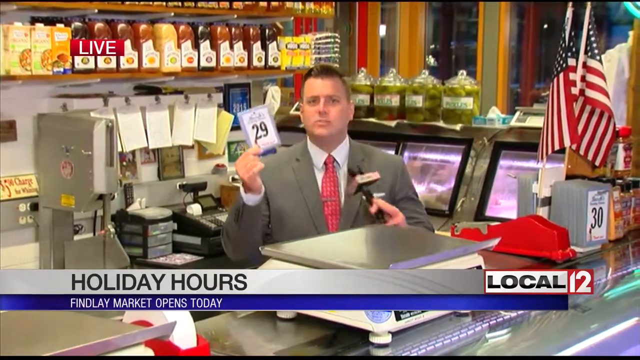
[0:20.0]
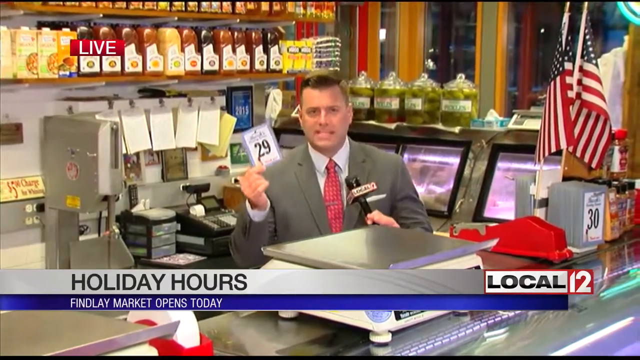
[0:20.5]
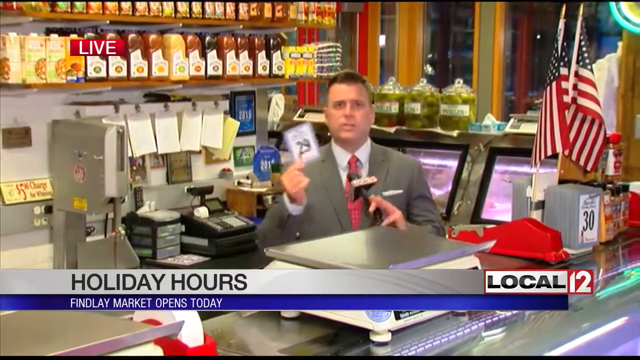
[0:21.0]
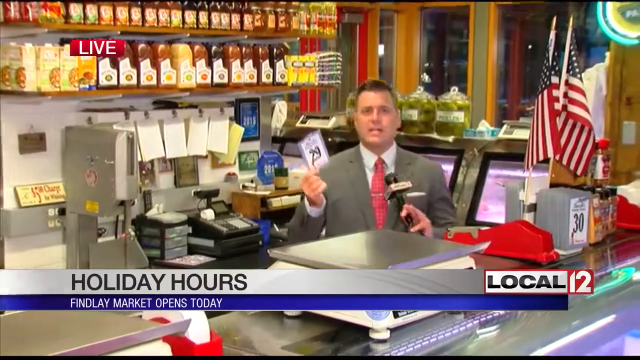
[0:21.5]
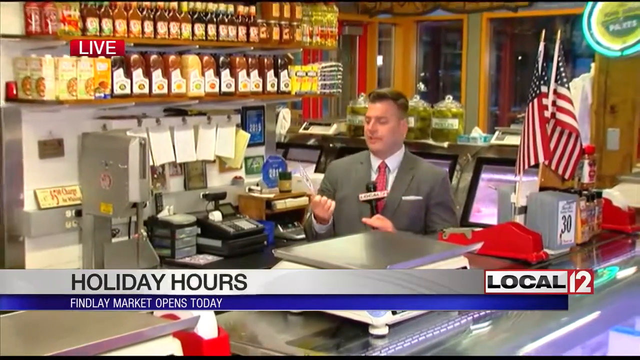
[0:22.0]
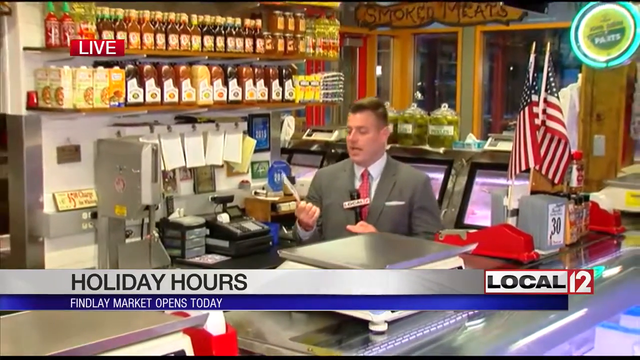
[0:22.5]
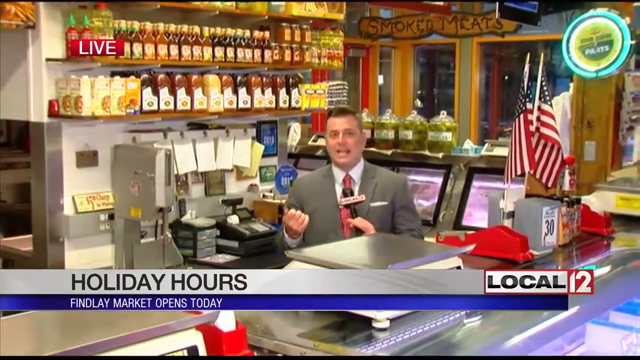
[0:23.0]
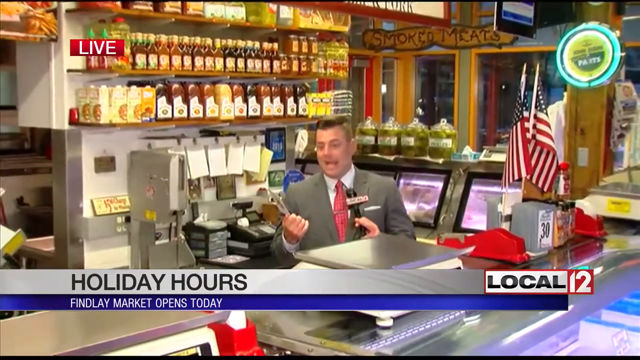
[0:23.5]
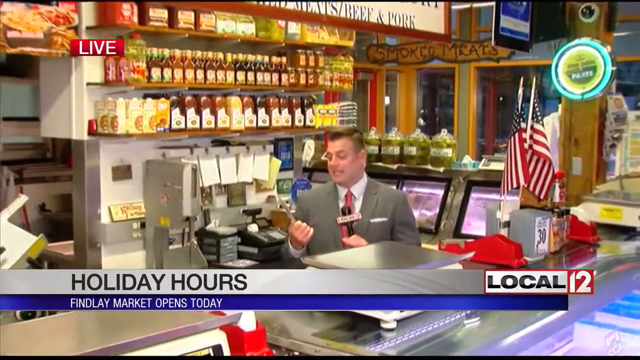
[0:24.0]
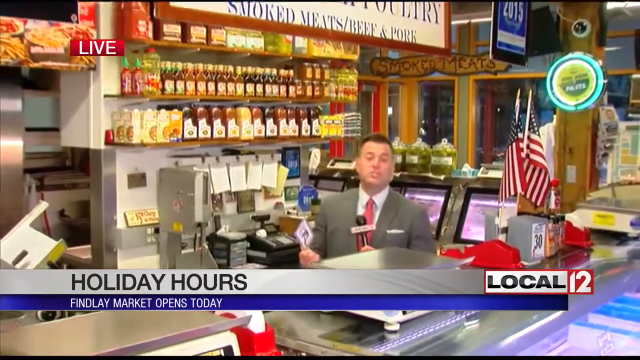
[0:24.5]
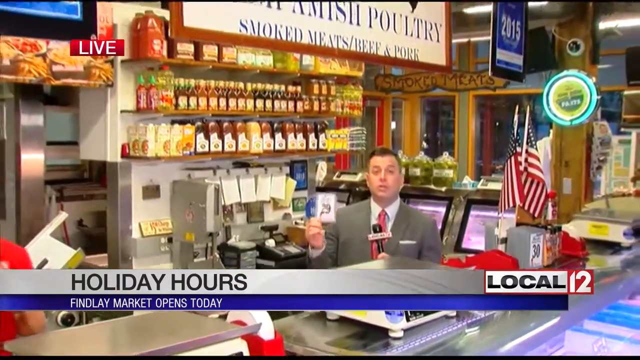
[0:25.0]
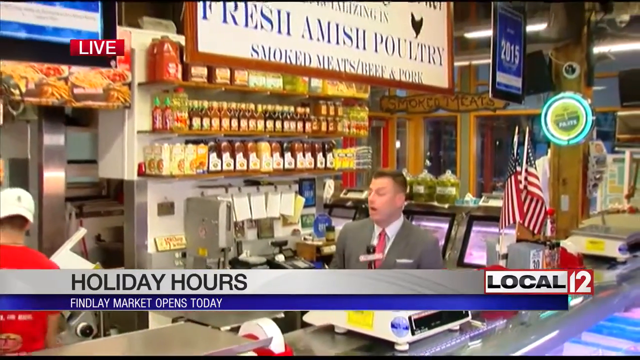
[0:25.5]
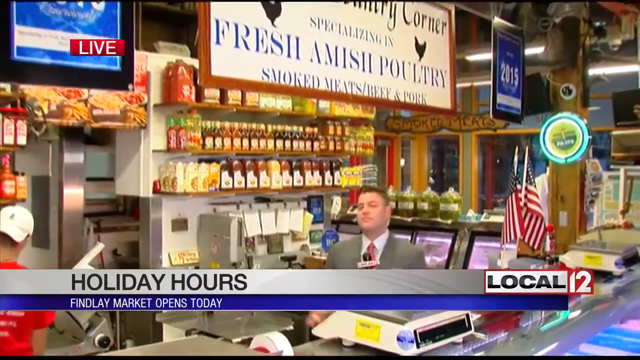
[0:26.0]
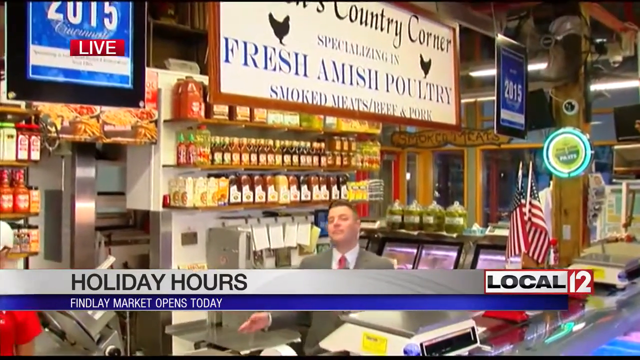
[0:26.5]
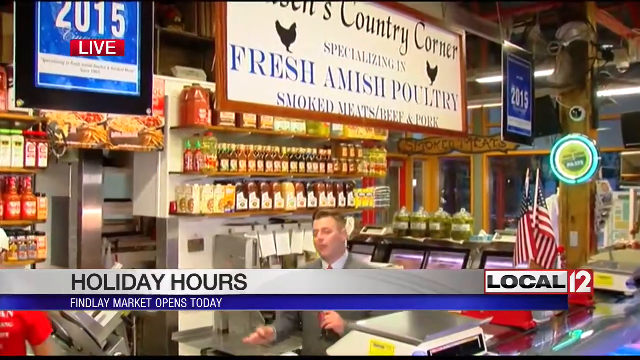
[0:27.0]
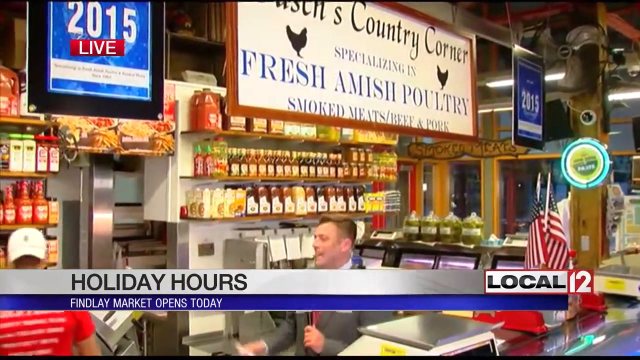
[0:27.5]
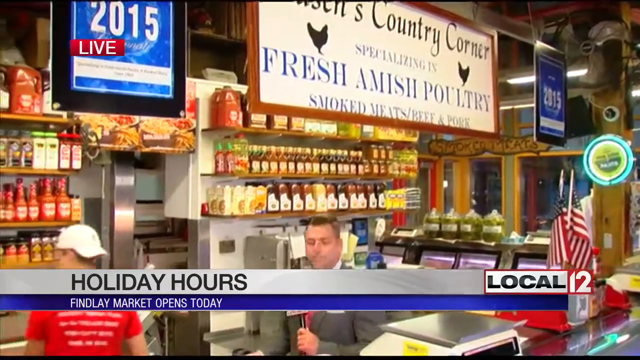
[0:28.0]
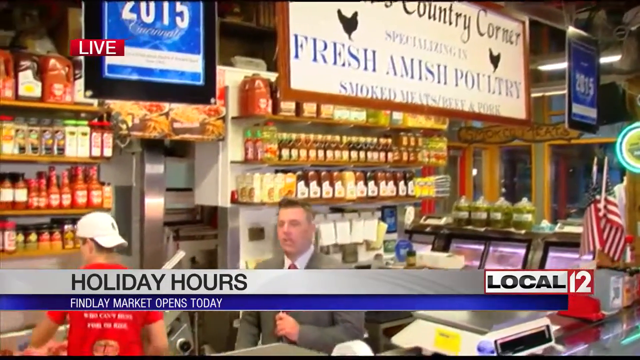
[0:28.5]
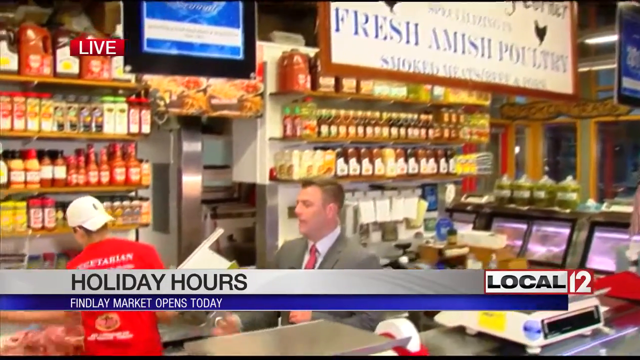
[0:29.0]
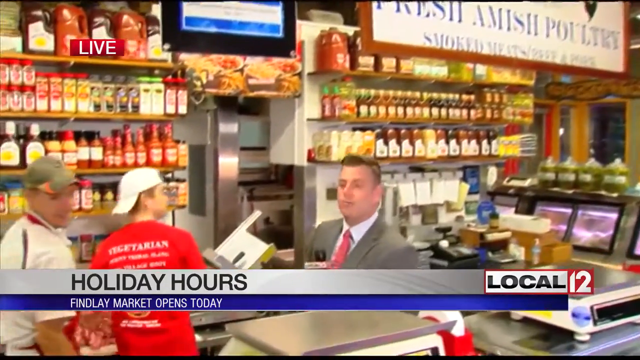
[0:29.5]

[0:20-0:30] Adam Clements reports while holding up a card with the number 29 in his right hand and the microphone in his left, standing behind the counter of some kind of store. Behind him is a cash register, and above it is a shelf with jars of liquid that could be sauce. To the right are jars of pickles. Text at the bottom of the screen reads "holiday hours, Friday market opens today." The camera zooms out to show the rest of the market, with signage reading "country corner, fresh Amish poultry, smoked meats / beef and pork." Adam walks up to a couple of employees, younger Caucasian adults. The one in front of Adam wears a red shirt and a white baseball cap backwards; behind him is another Caucasian male in a white button-up polo and a green cap facing forward.